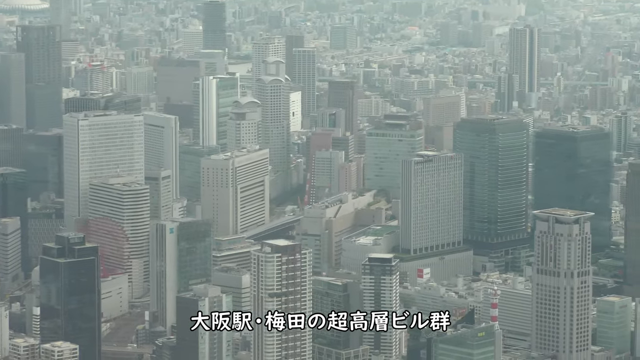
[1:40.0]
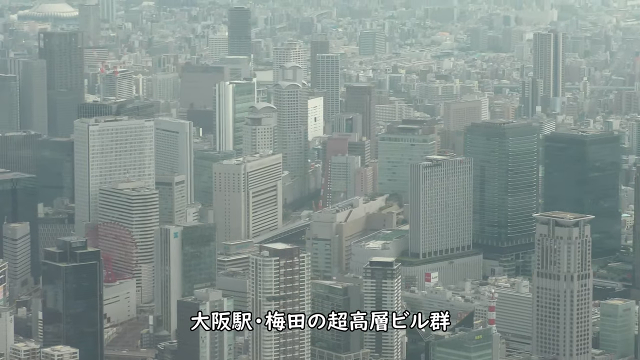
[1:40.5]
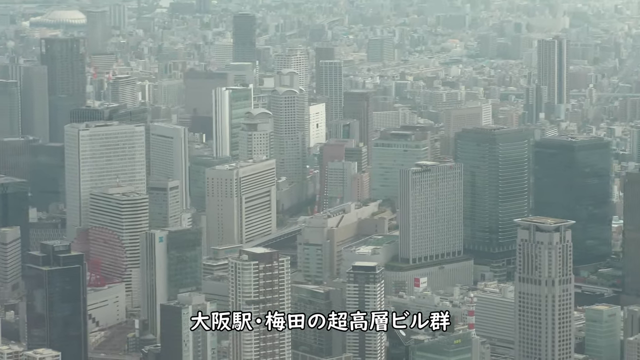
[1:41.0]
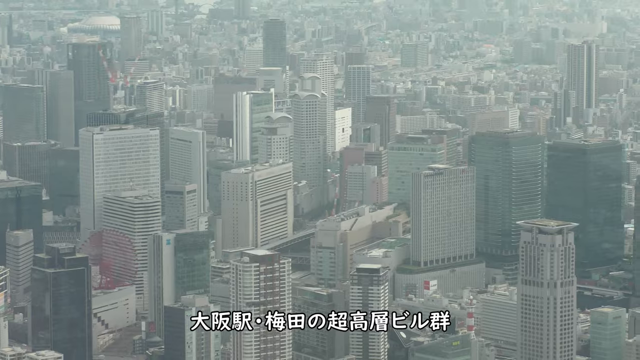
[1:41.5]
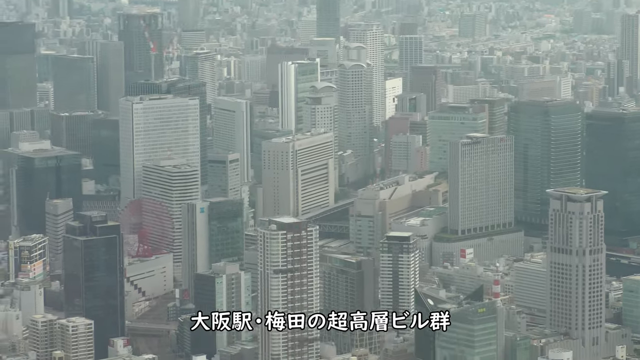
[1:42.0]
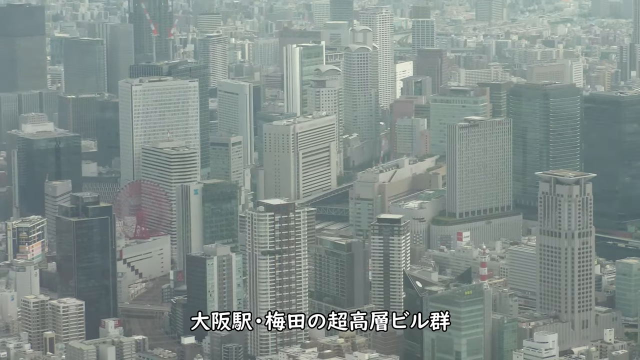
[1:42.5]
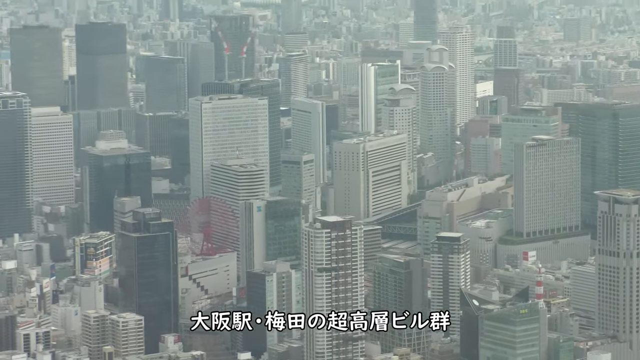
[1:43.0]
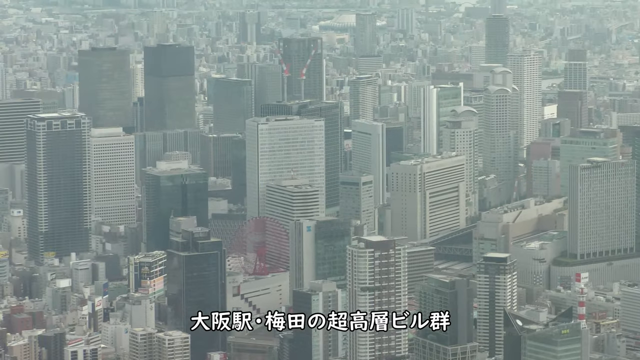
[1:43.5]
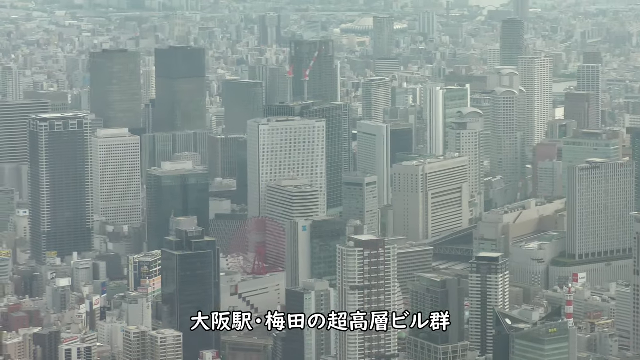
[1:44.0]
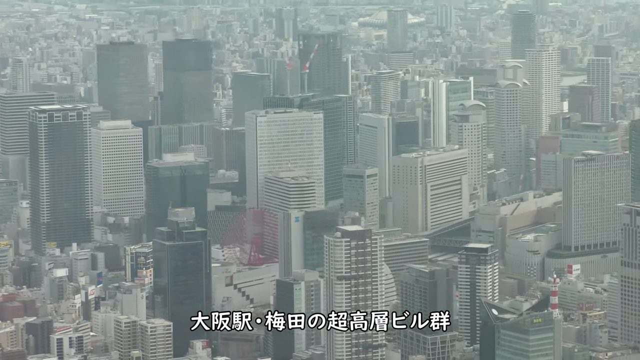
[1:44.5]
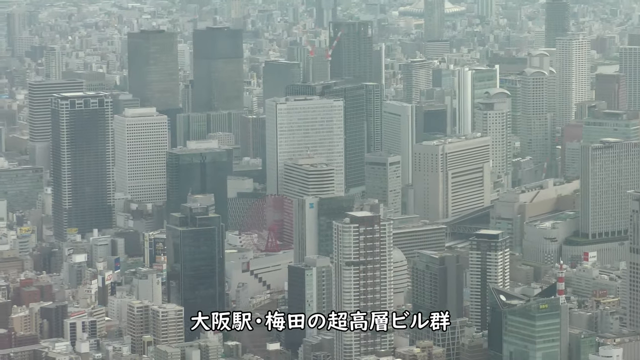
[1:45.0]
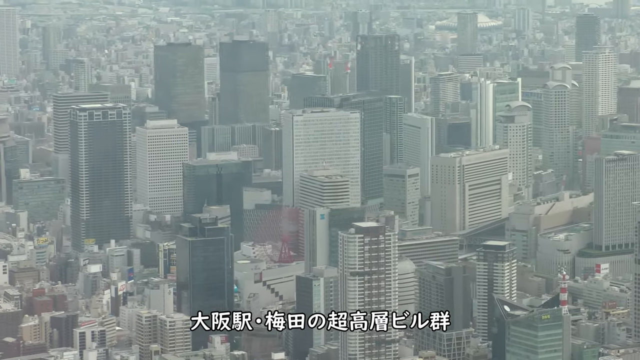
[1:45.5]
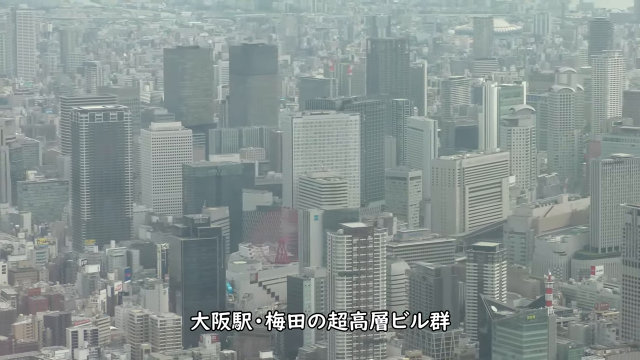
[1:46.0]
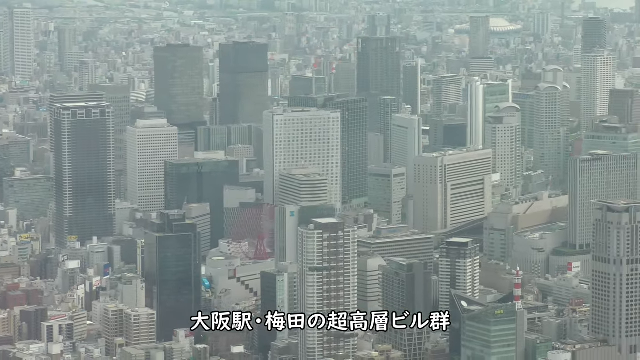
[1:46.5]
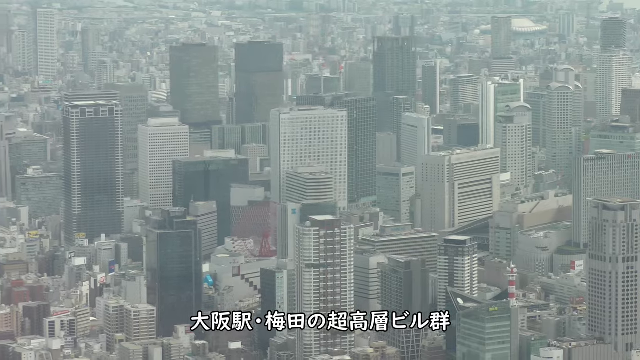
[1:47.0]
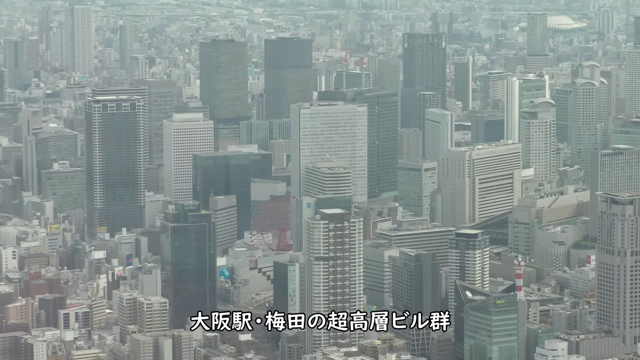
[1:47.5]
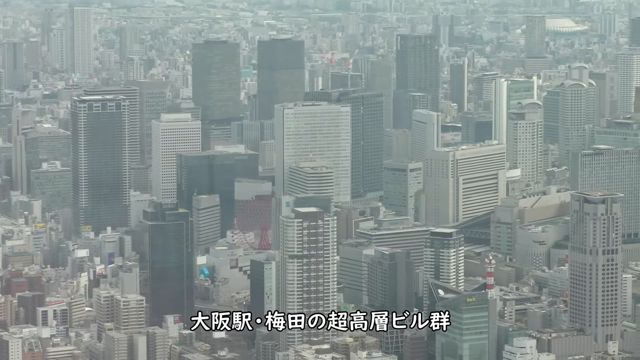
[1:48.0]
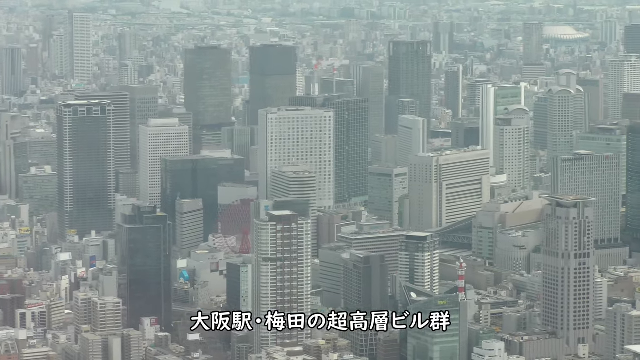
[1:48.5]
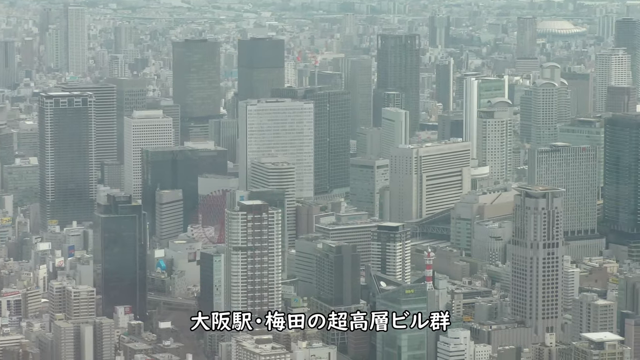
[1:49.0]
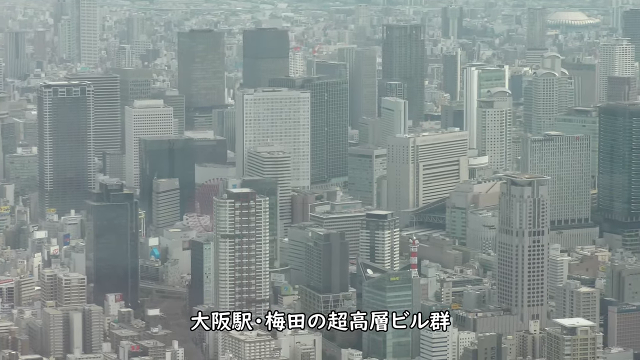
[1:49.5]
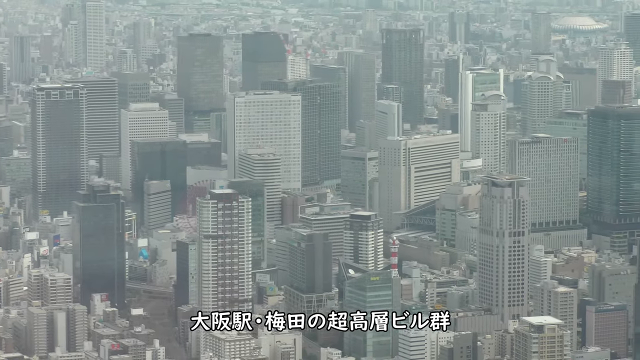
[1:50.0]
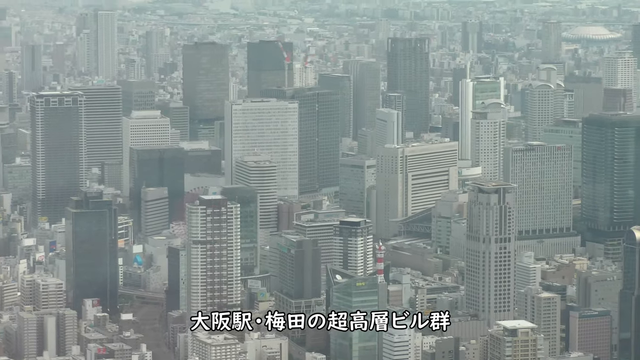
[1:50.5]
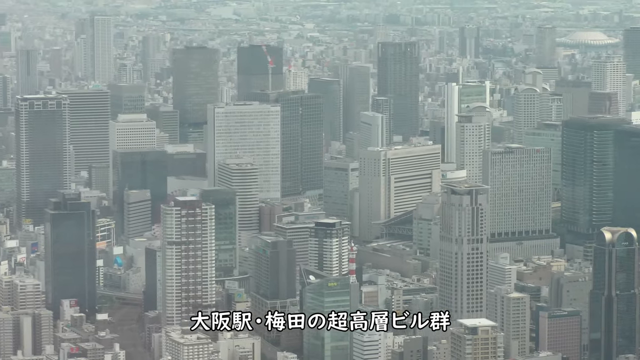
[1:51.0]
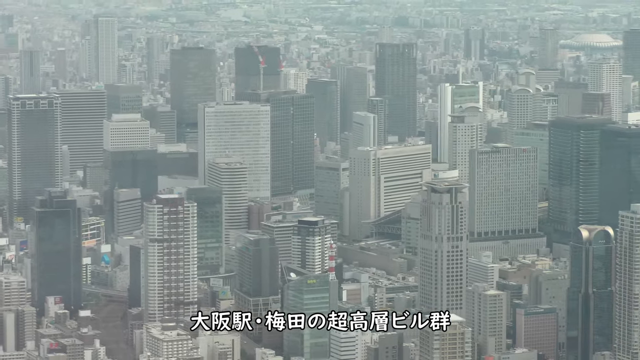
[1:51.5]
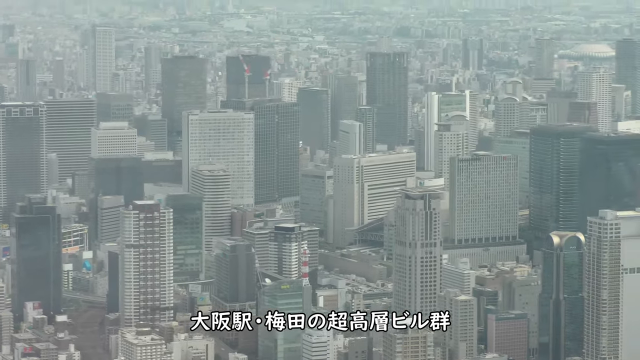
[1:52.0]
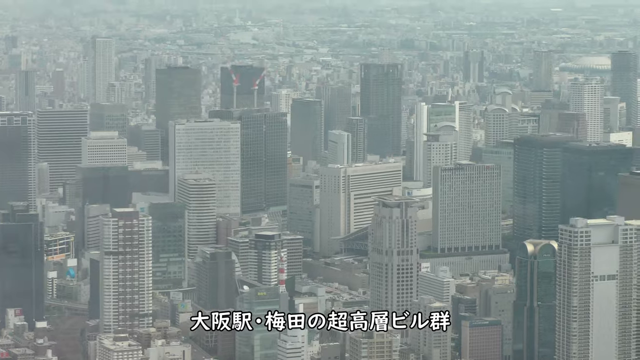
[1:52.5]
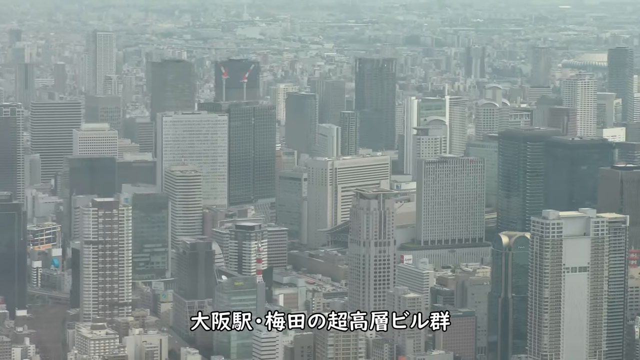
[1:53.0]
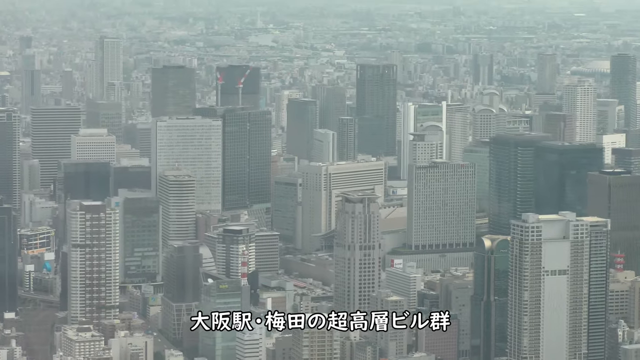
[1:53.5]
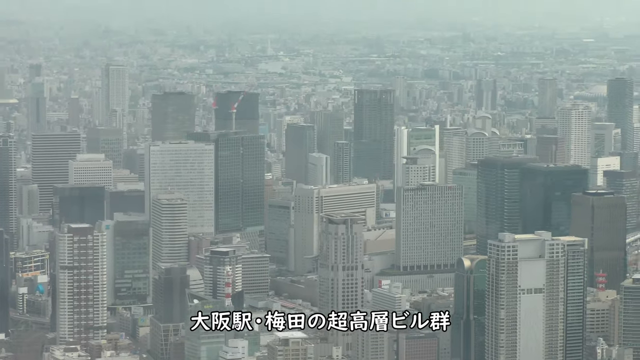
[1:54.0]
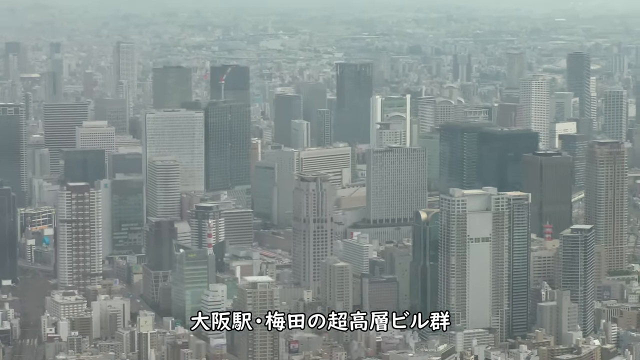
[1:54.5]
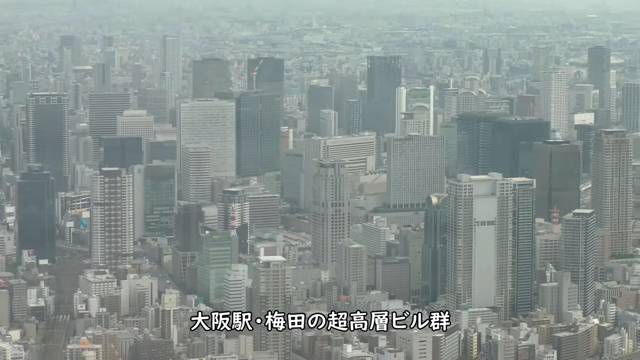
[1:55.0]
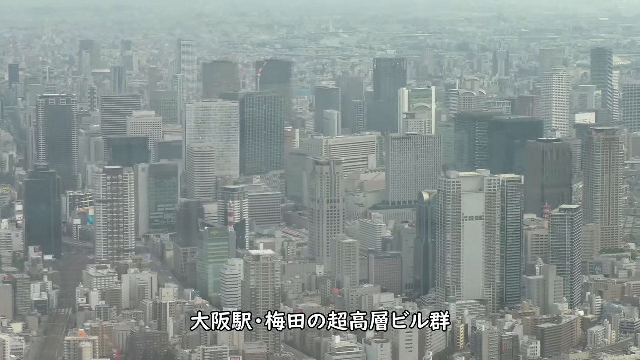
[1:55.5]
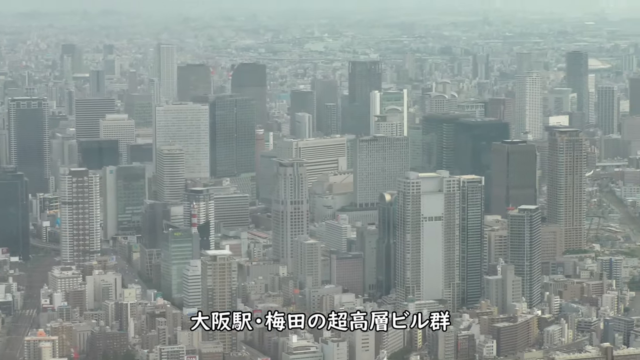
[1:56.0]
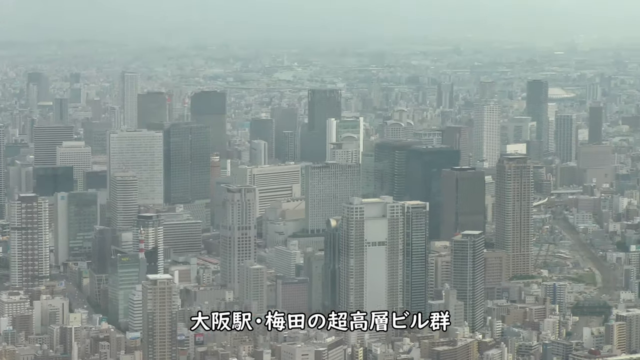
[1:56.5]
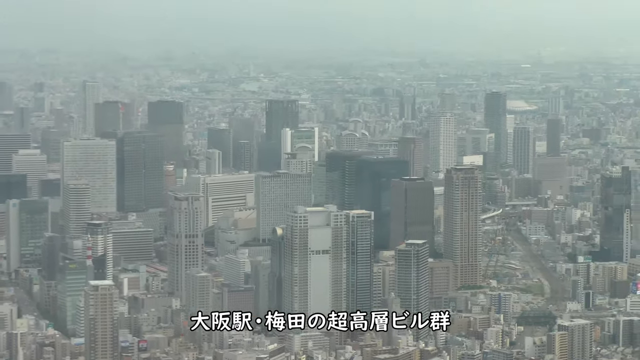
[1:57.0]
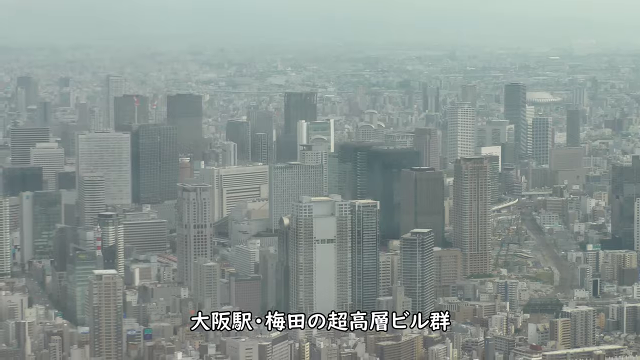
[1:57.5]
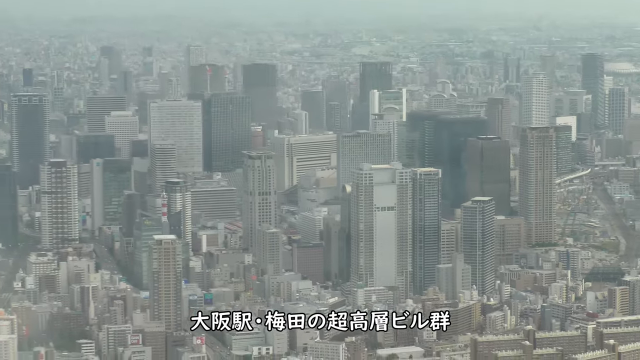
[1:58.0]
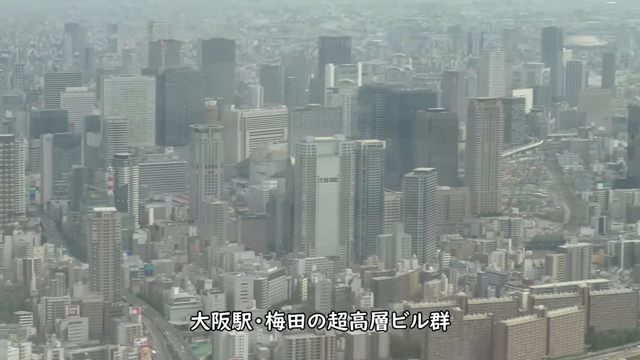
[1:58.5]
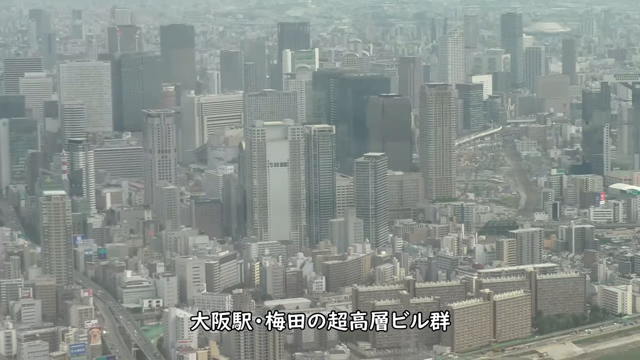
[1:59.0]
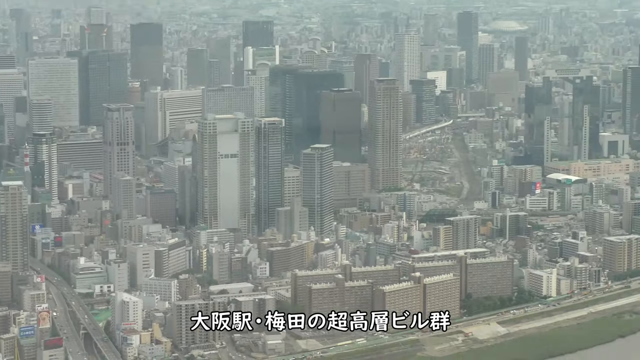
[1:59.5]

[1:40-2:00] The view focuses on the main area of downtown Tokyo, the most densely packed area with the tallest buildings. What appears to be a red Ferris wheel of some sort is on the bottom left of the screen, next to a gray building. The buildings are bunched very close together and vary in shape, width and height: in the center is a wide, white-like building with long windows, other buildings in the background are dark black, and another tall black building is on the left. The camera pans out in a circular motion, capturing all the taller buildings. Japanese text in various shapes and designs, in bold white lettering, is on the bottom of the screen.